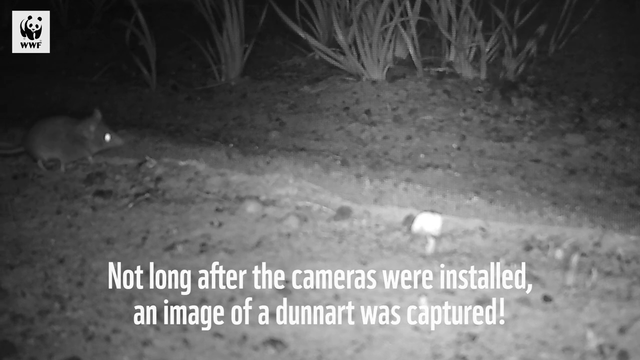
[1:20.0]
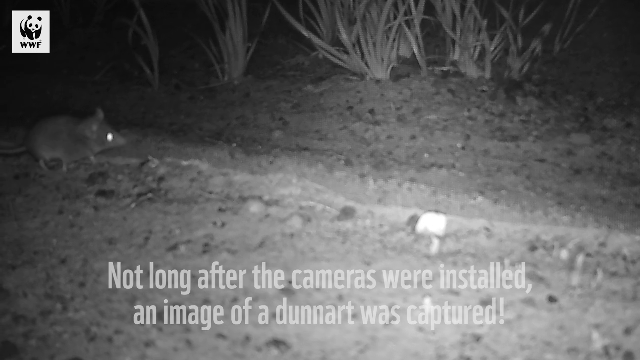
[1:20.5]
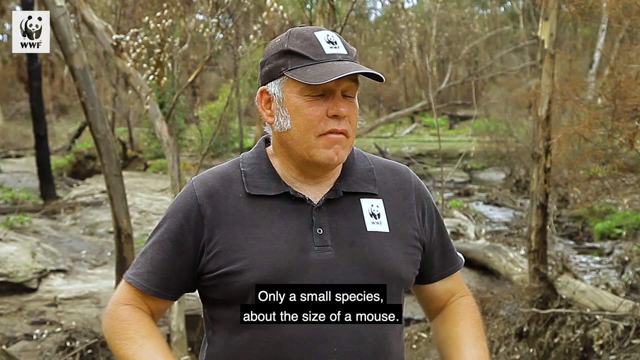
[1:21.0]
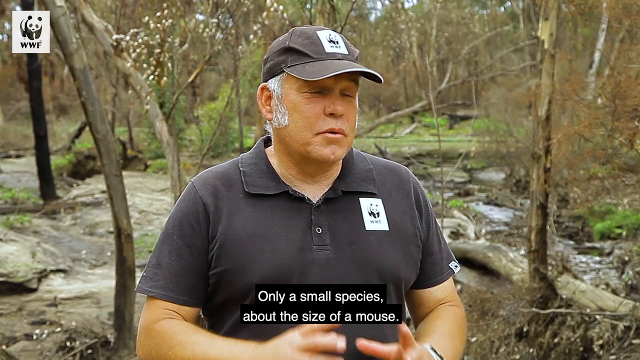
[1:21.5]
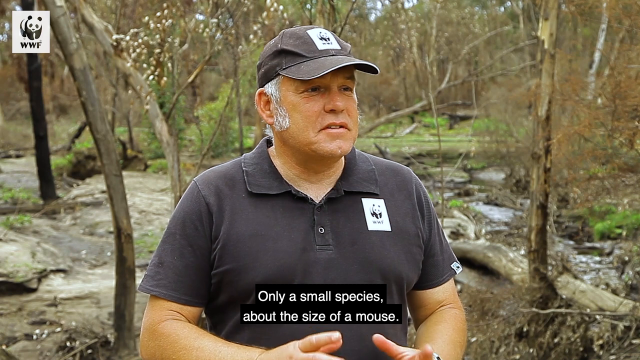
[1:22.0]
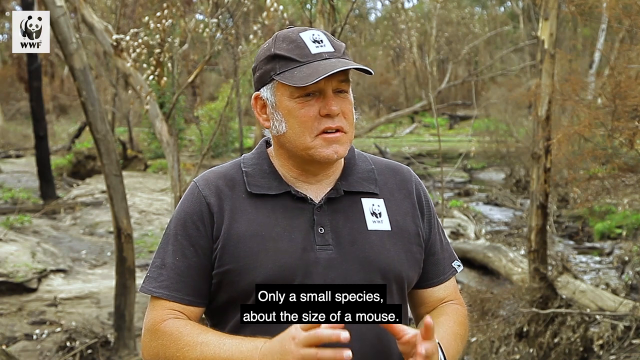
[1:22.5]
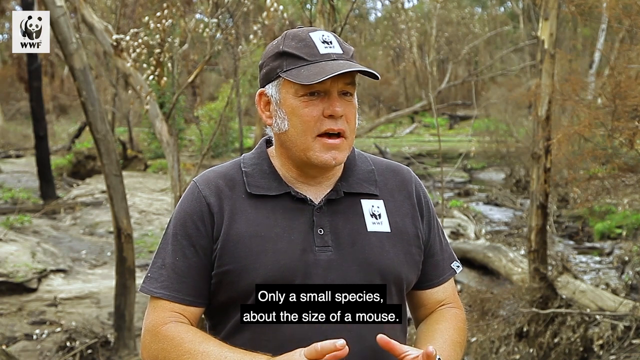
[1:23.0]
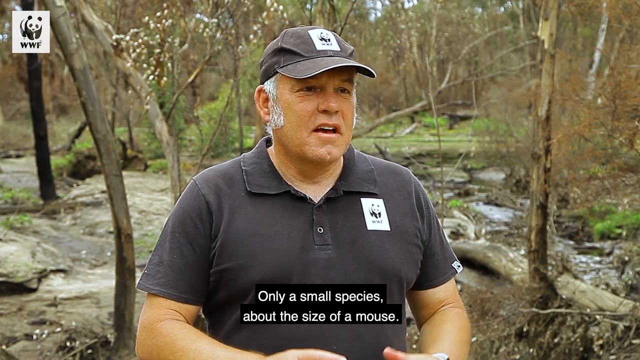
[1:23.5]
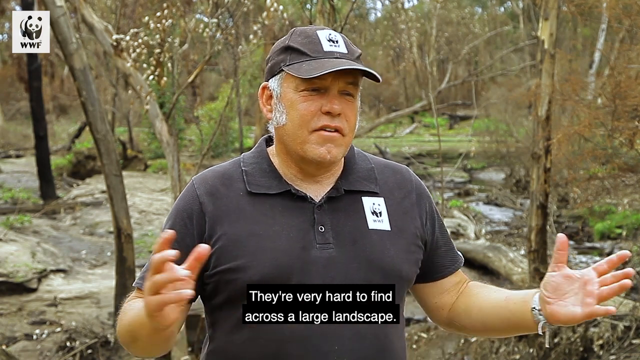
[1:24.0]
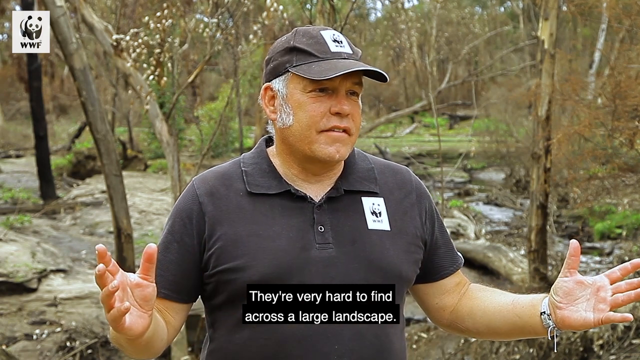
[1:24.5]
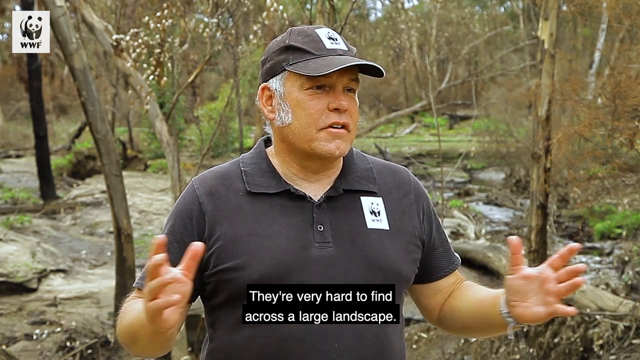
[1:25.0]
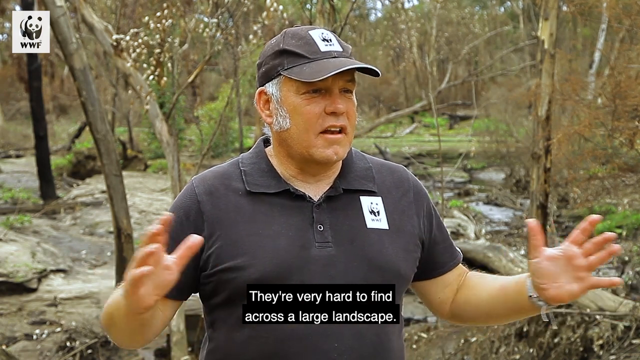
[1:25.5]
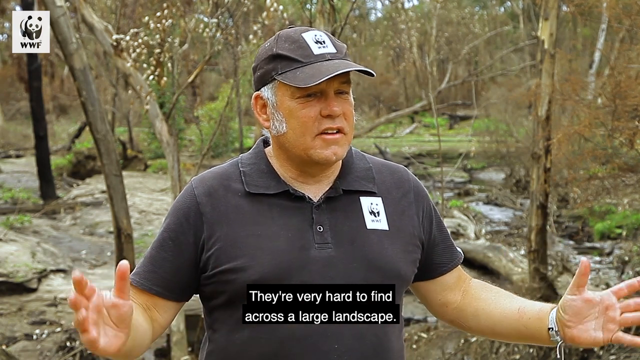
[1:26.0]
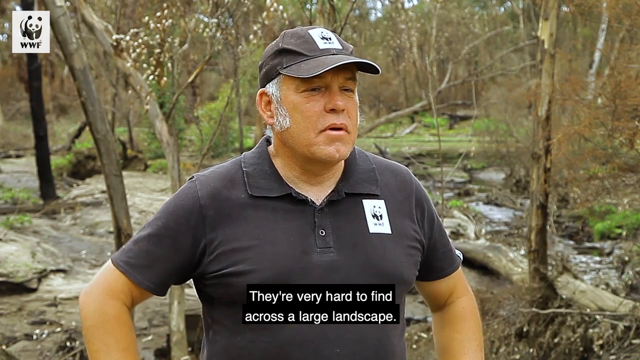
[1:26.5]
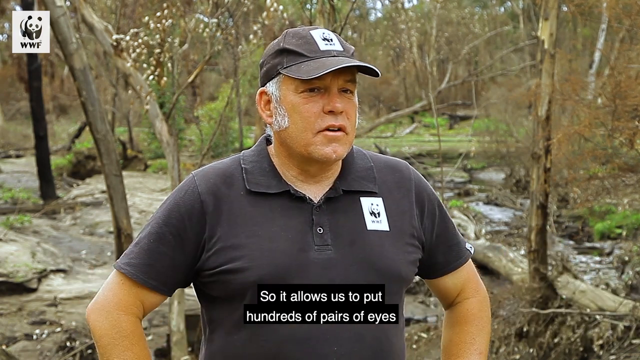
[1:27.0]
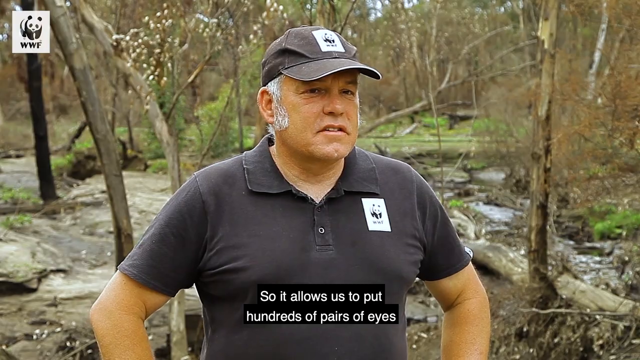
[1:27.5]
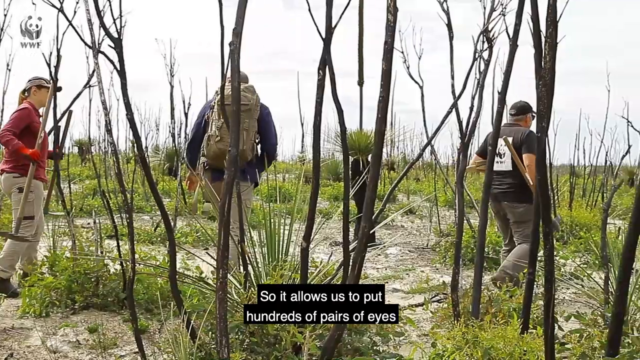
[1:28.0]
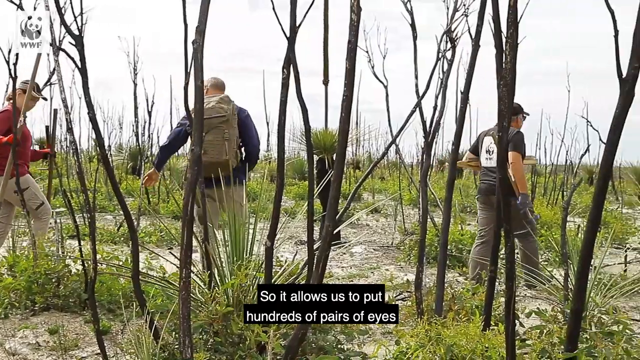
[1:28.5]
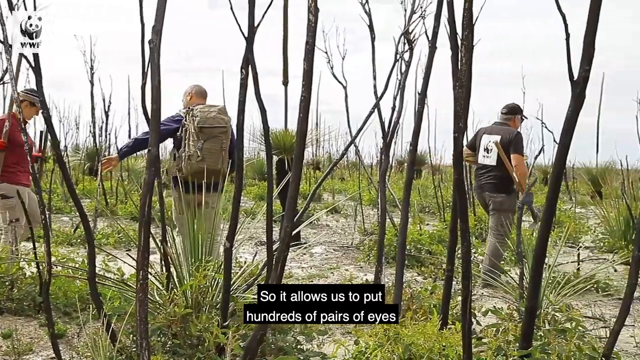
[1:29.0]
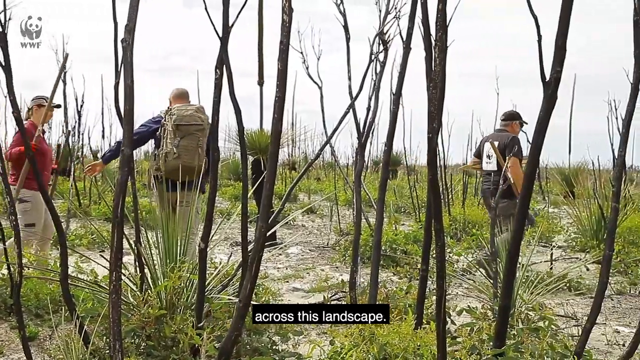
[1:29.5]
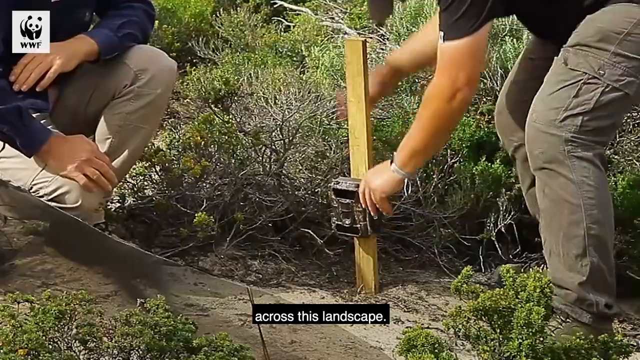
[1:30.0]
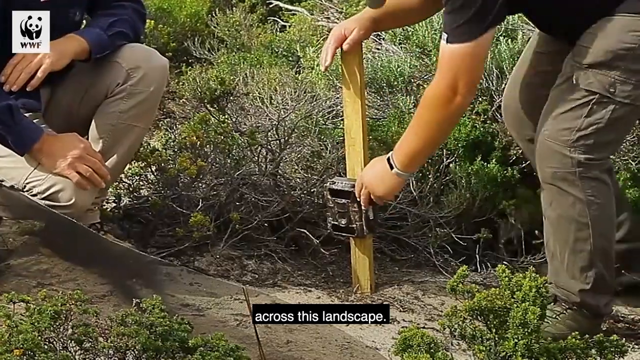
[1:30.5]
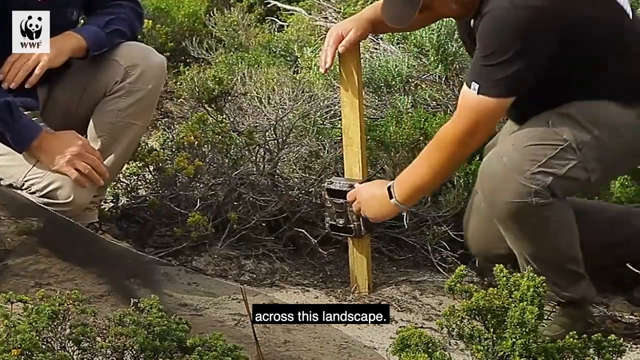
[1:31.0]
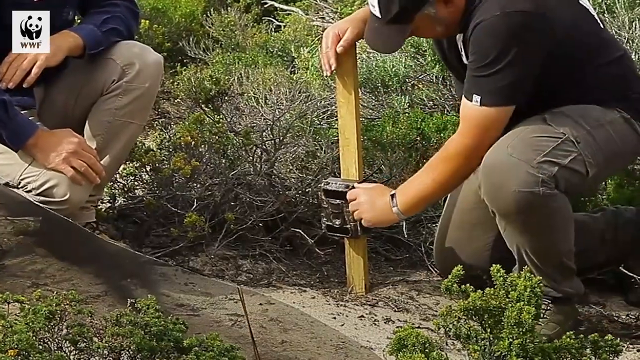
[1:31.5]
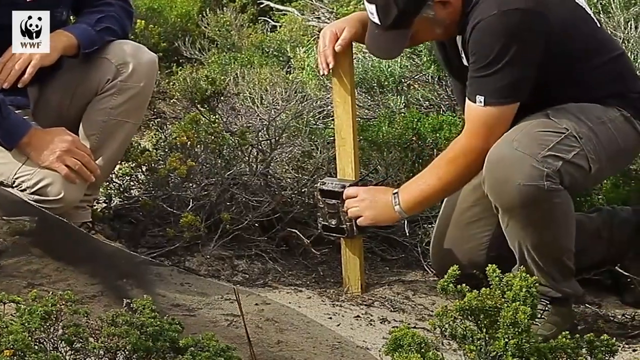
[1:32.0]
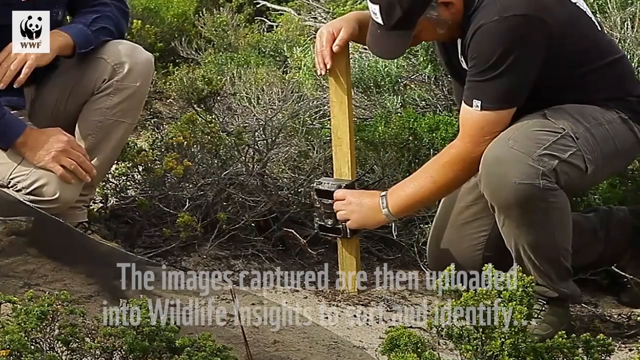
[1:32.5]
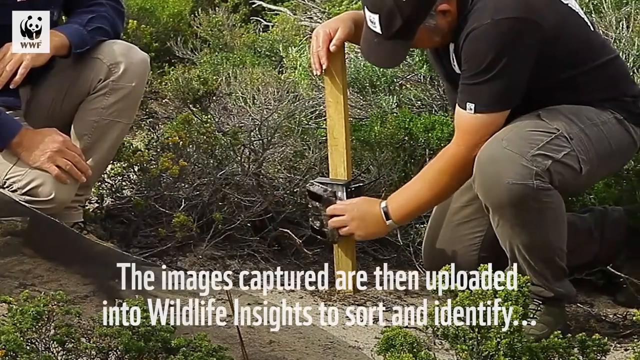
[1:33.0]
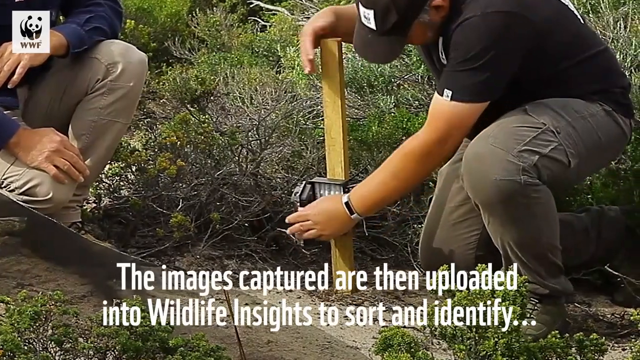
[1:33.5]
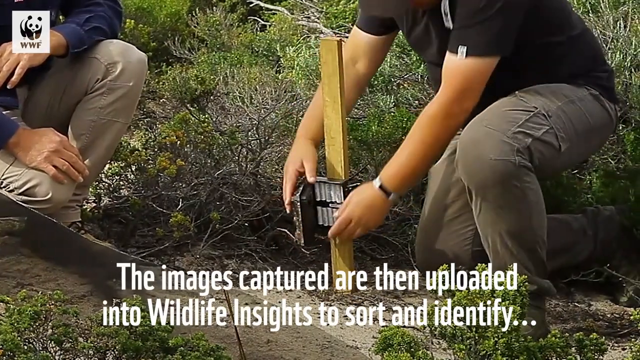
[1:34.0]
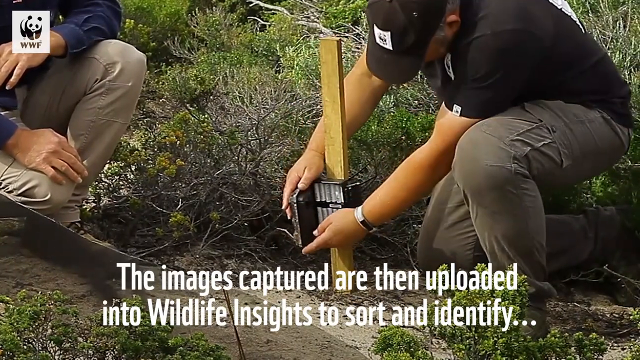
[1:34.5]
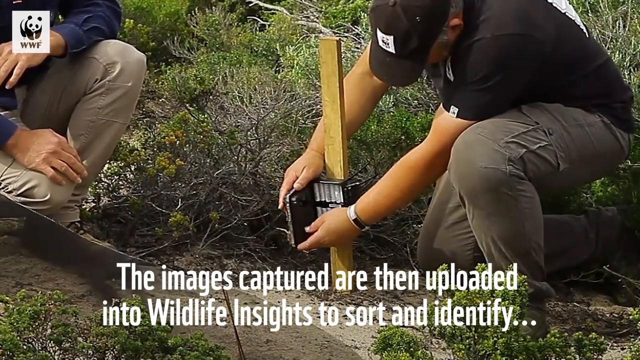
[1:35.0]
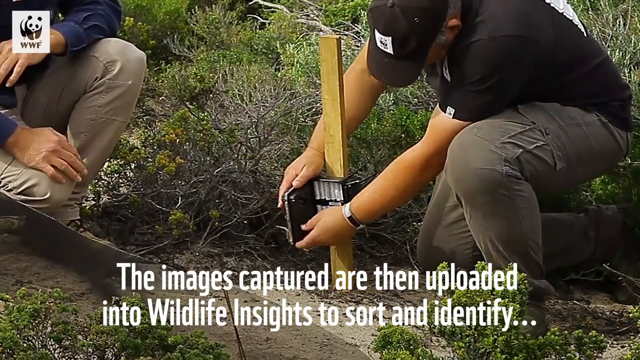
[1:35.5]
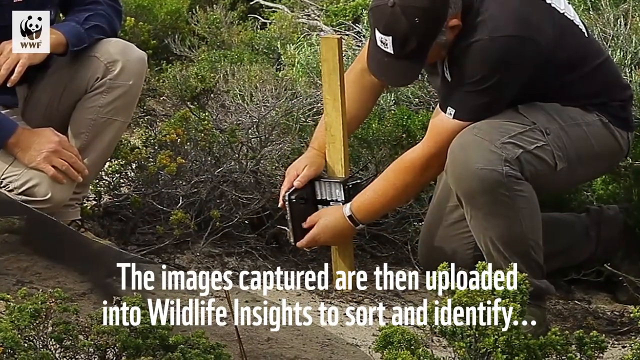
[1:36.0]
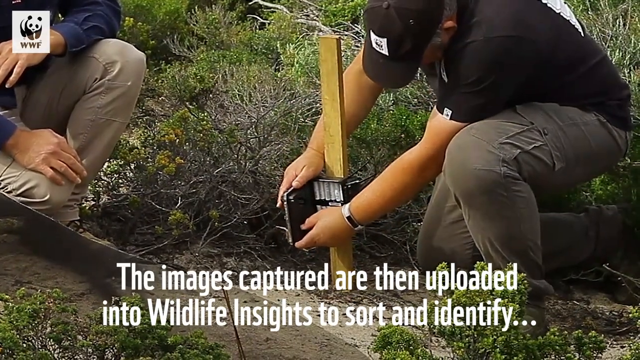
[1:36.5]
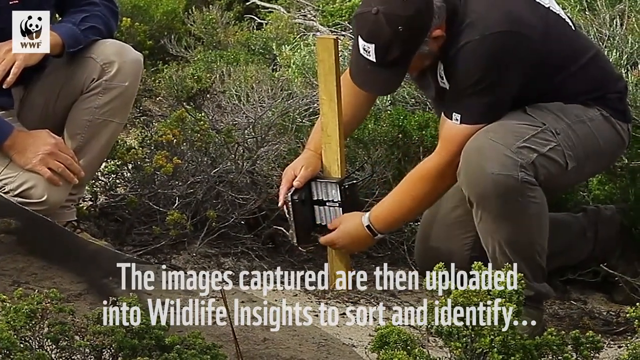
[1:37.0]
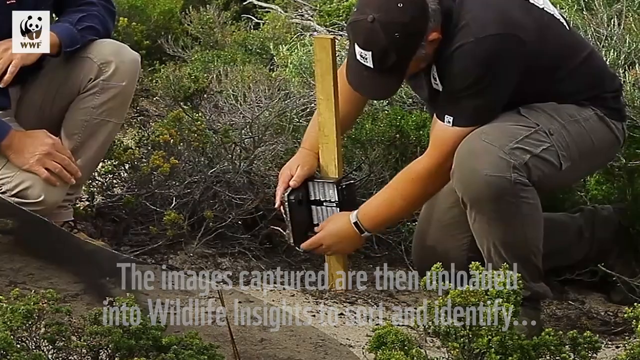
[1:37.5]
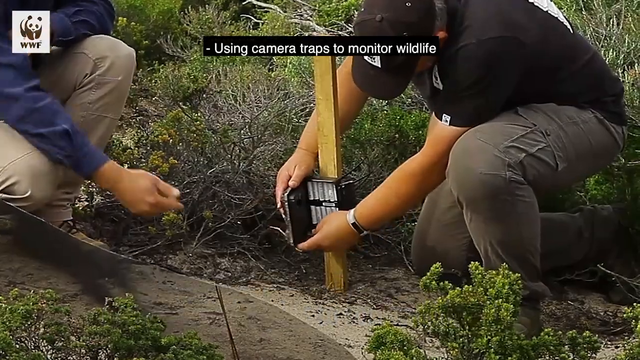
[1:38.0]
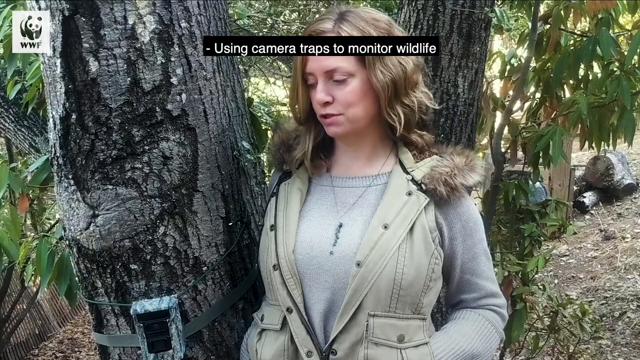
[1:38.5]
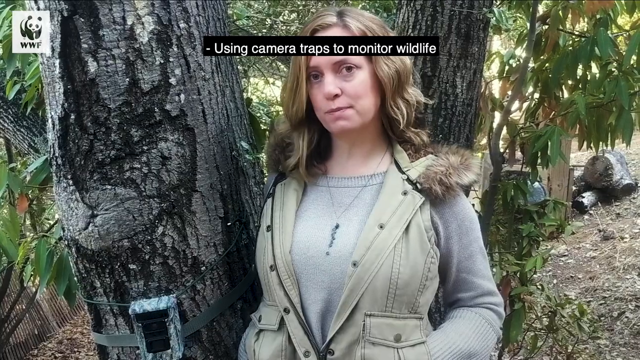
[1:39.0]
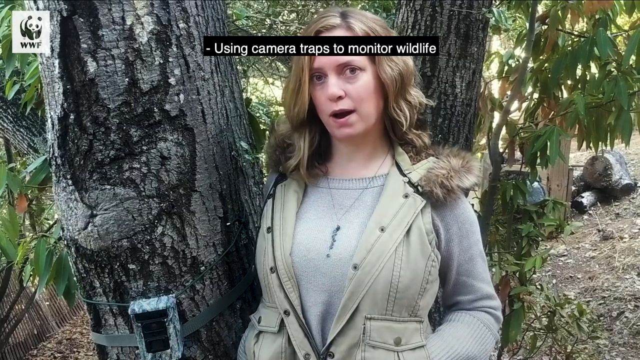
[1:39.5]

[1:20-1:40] The night vision footage of the rat continues, then the video cuts back to the man in the black shirt speaking to the camera. He holds both hands in front of him, cupping them together and then stretching them out to both sides, moving them back and forth, before returning to the hands-on-hips pose as he continues speaking. A cut returns to the men in the field, where another person, seemingly a woman in a red shirt, walks along the left side of the frame; of the other two, one is in the center and one is on the right. They gather around the post and begin interacting with the base of the black object. The man on the right opens the door on the front and carefully moves it around with both hands, and the one on the left reaches forward briefly before the camera cuts to a woman speaking to the camera.